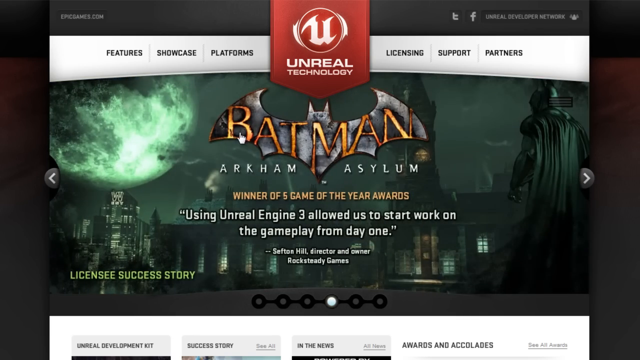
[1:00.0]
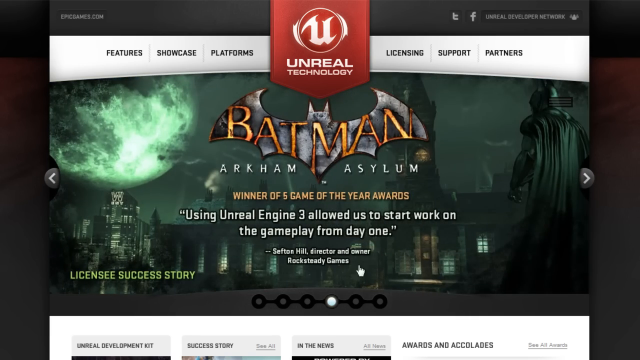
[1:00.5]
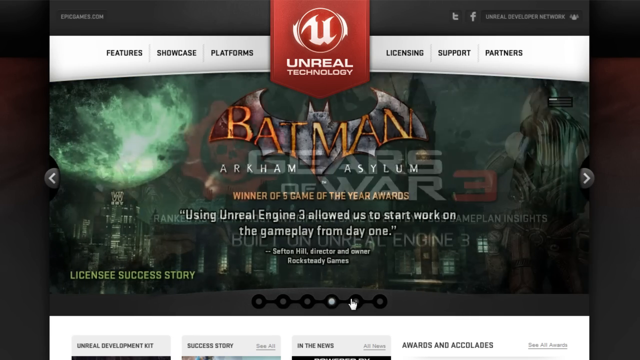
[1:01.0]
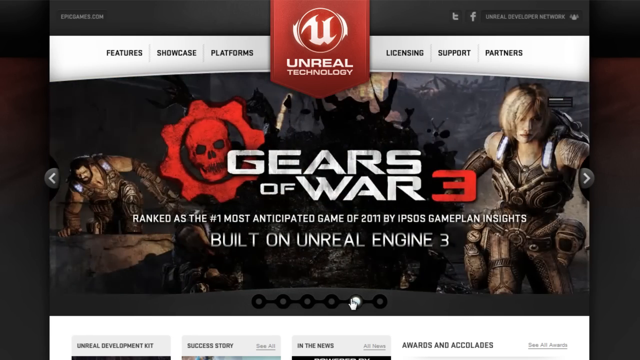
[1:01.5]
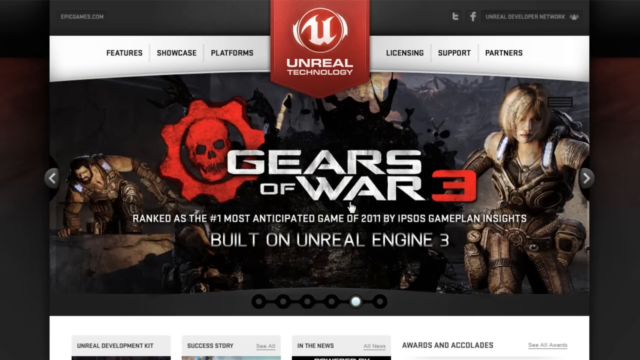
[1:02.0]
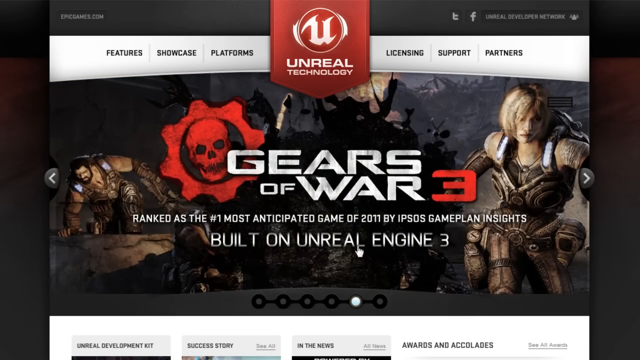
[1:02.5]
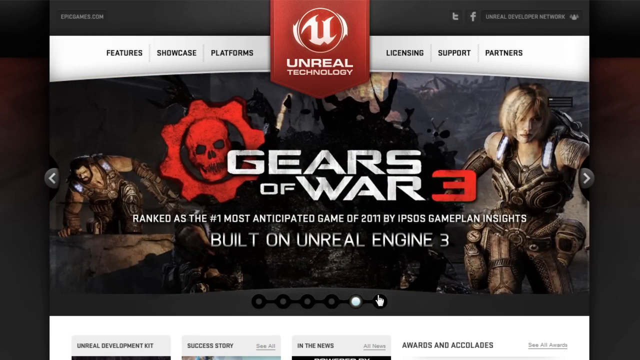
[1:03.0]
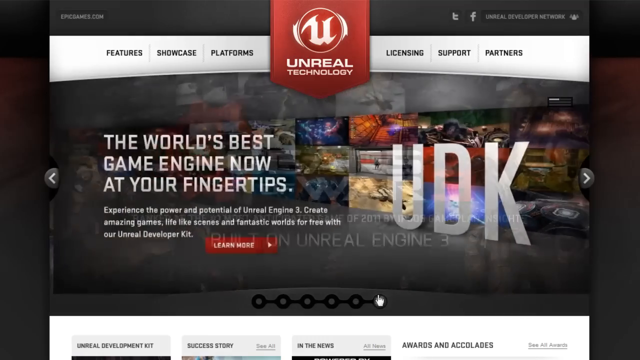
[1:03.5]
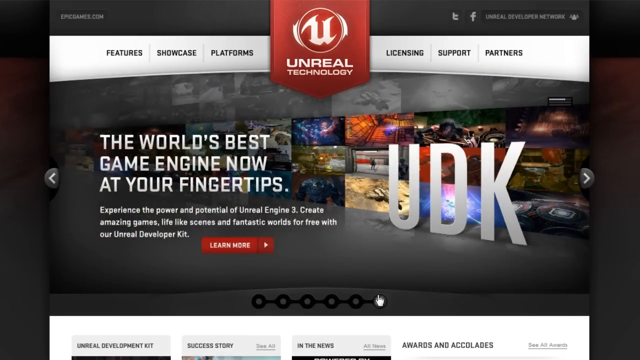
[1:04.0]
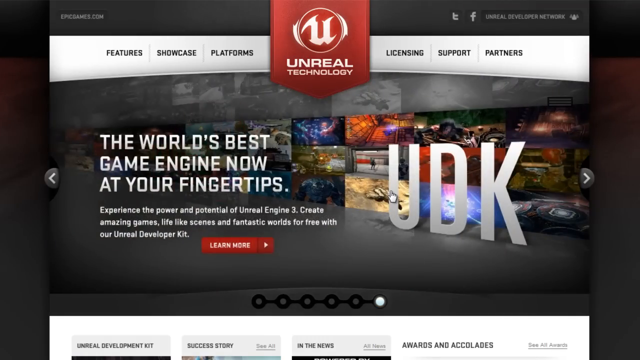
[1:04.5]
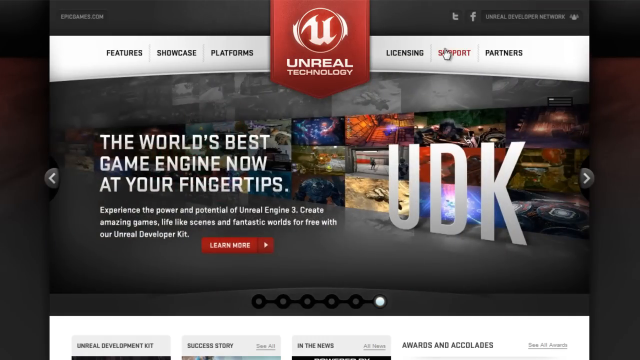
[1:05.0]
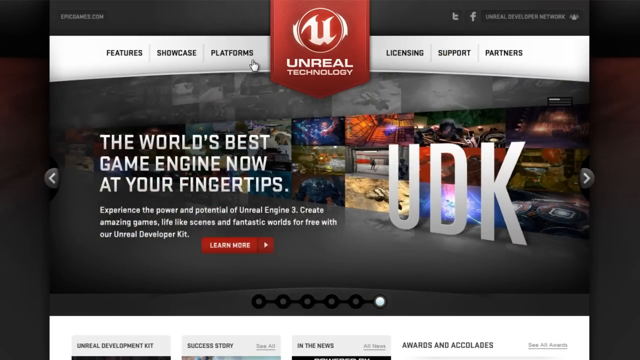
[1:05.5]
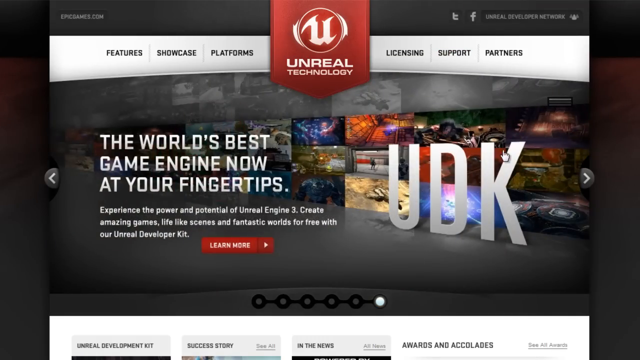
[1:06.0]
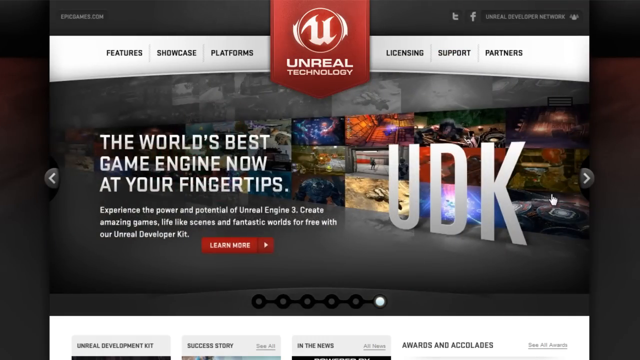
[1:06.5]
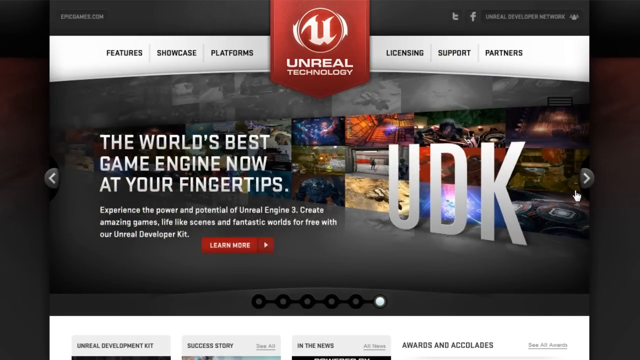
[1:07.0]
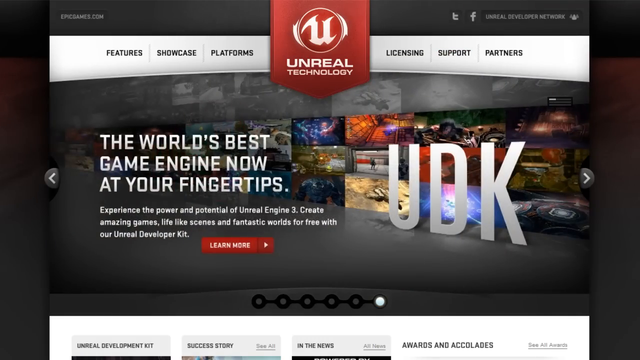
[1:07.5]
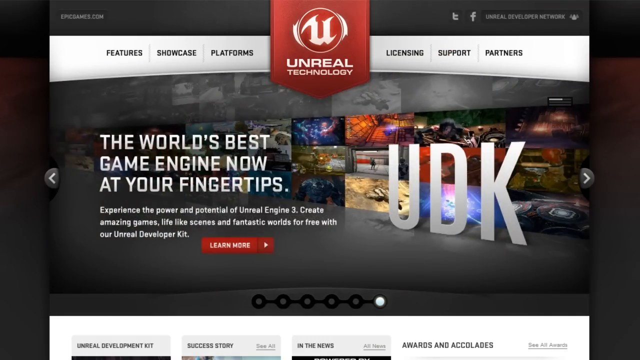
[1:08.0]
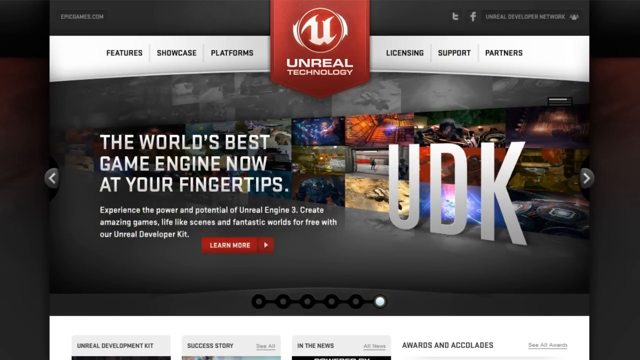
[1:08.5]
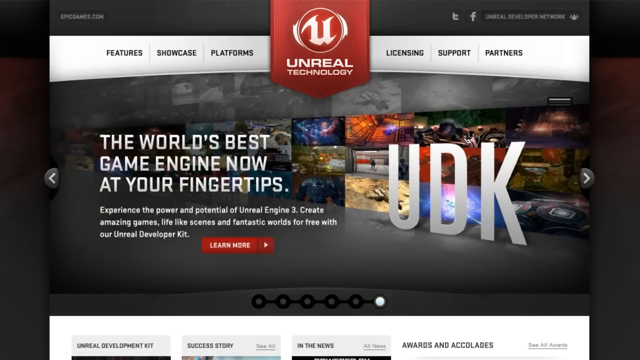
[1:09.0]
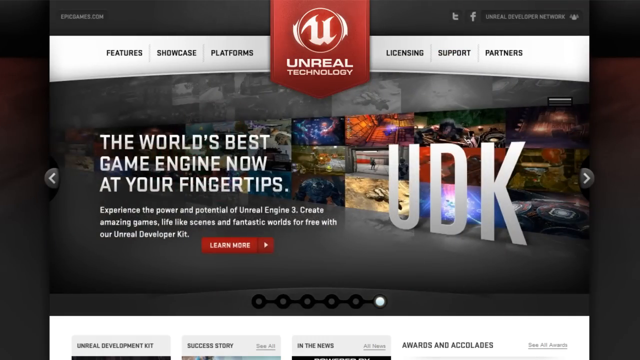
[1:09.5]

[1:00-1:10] The man clicks onto the Batman slide and runs the mouse over where it says "Batman", then onto the Gears of War 3 slide and runs the cursor over it. He then goes to the top of the screen and hovers the mouse over the options: "Features", "Showcase", "Platforms", "Licensing", "Support" and "Partners". He moves the mouse quite rapidly, across the screen from the top to the right. There are arrows on the left and right sides of the screen for flicking through the slides quicker. A timer is in the top right corner, and when its bar reaches from the left to the right the page automatically moves from one slide to the next.